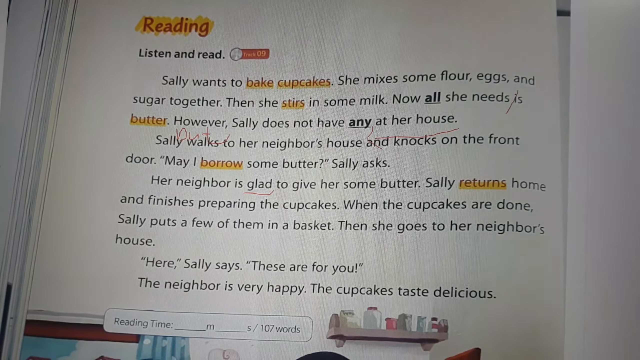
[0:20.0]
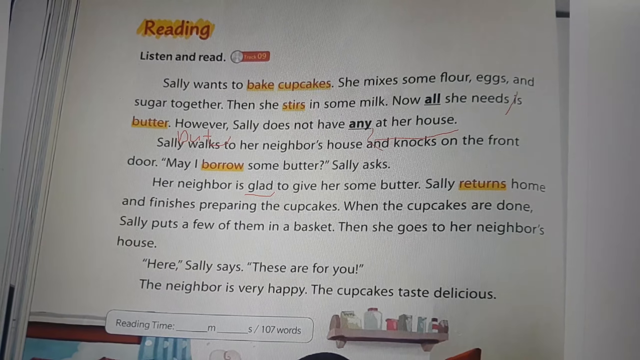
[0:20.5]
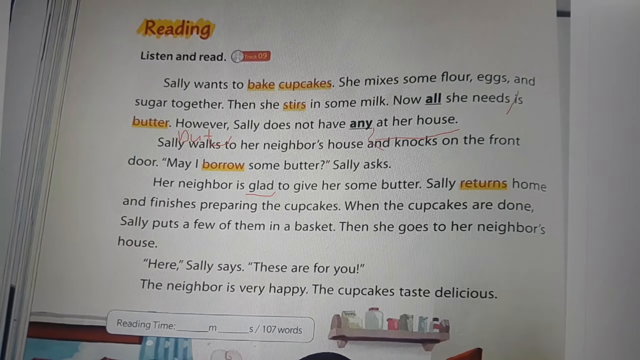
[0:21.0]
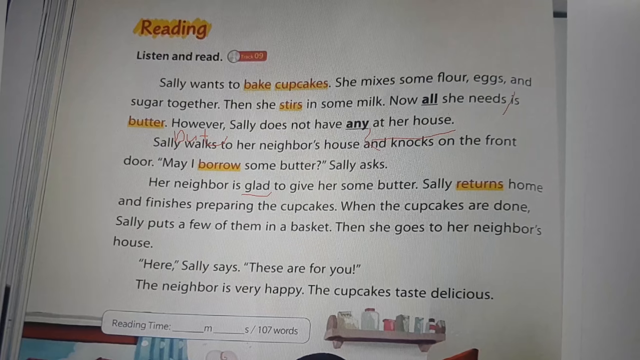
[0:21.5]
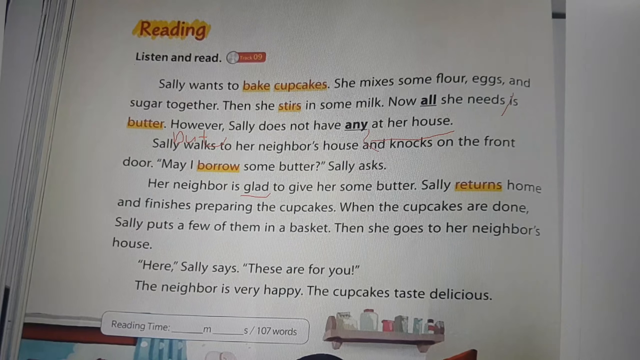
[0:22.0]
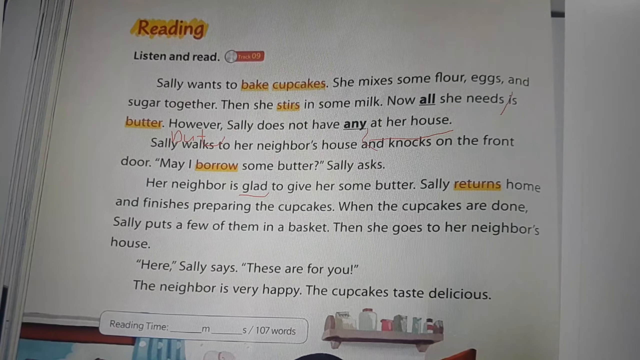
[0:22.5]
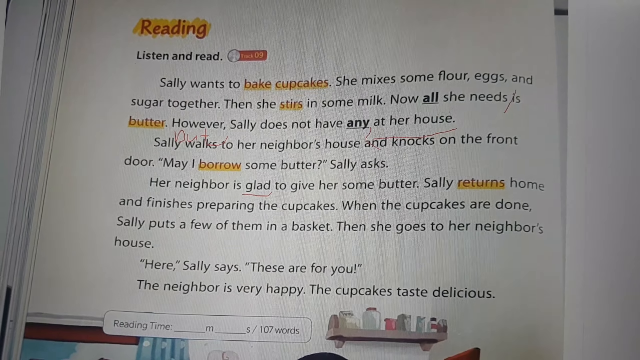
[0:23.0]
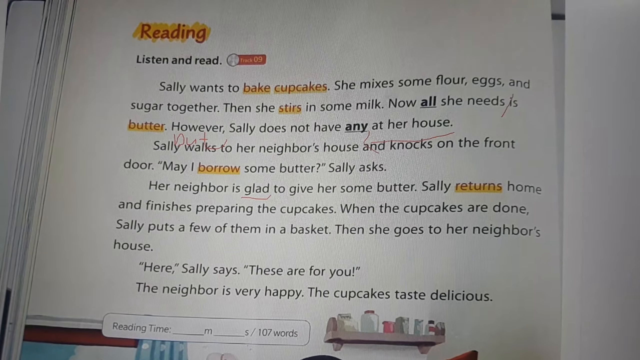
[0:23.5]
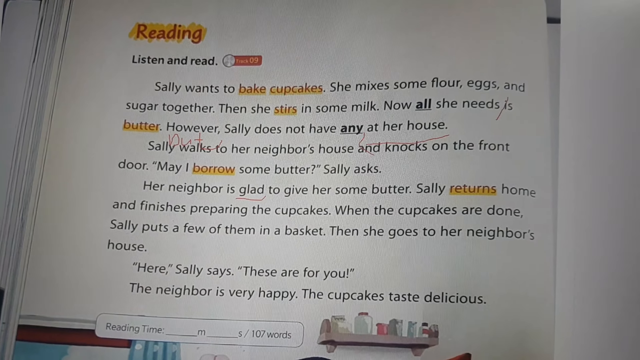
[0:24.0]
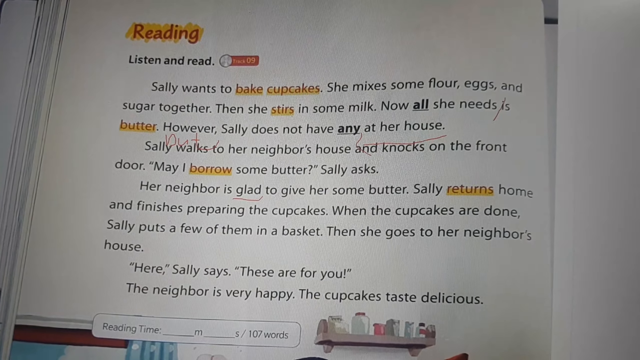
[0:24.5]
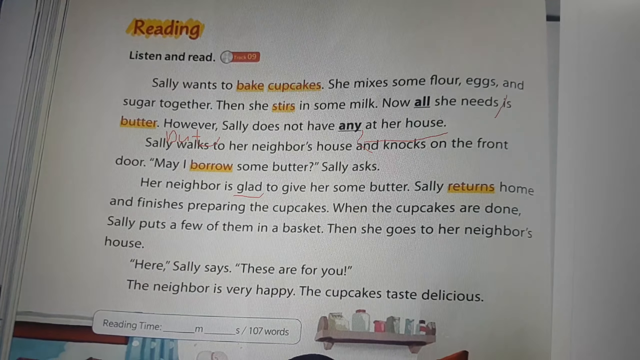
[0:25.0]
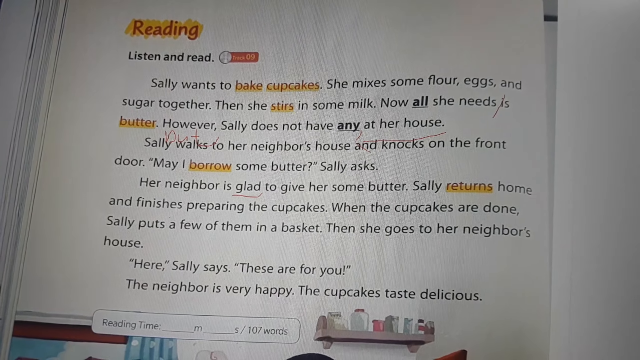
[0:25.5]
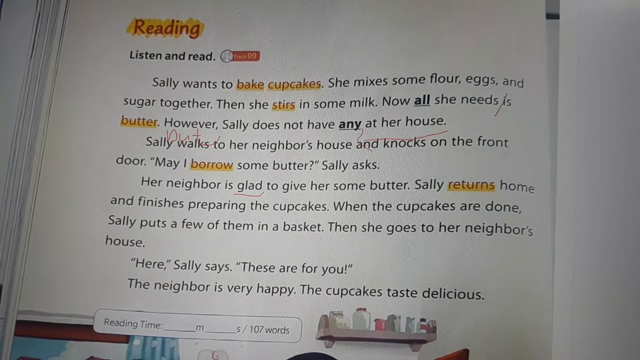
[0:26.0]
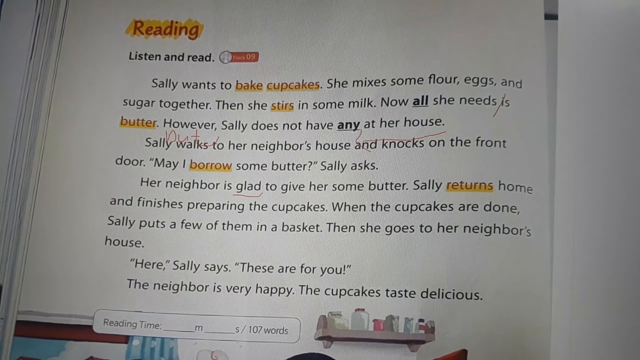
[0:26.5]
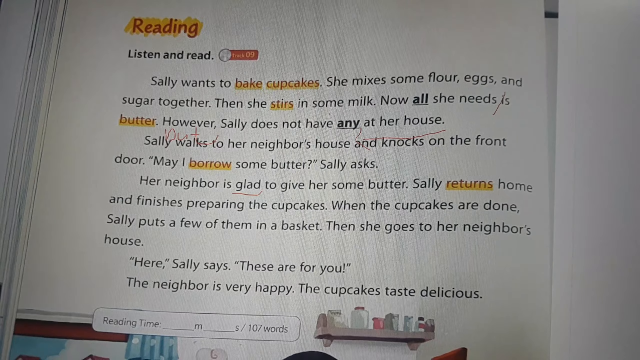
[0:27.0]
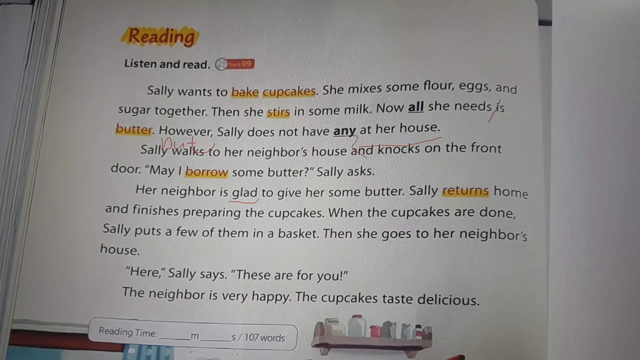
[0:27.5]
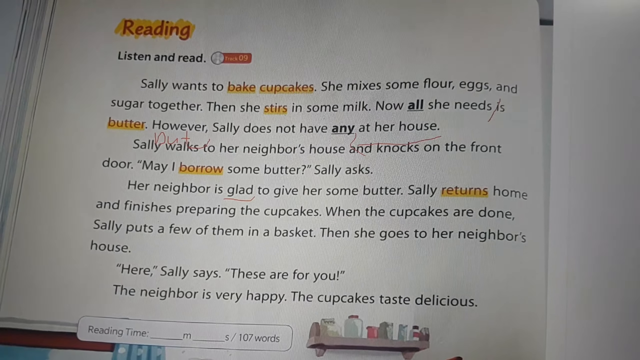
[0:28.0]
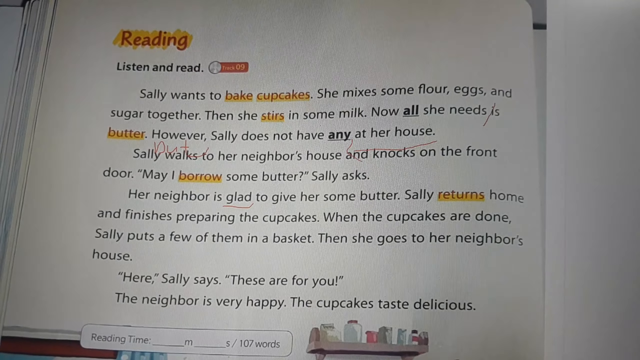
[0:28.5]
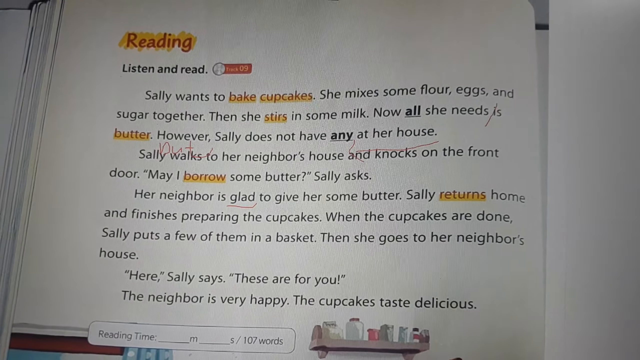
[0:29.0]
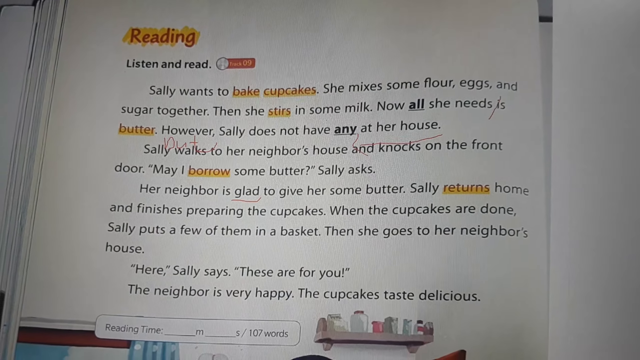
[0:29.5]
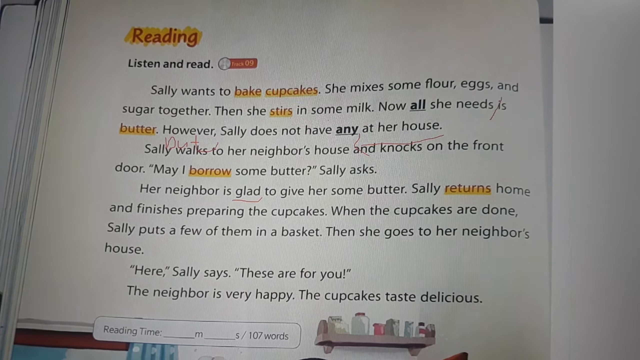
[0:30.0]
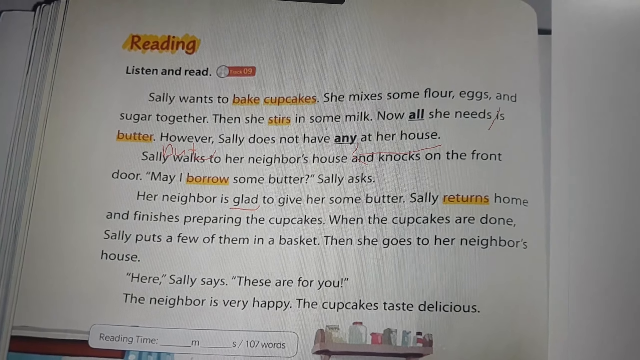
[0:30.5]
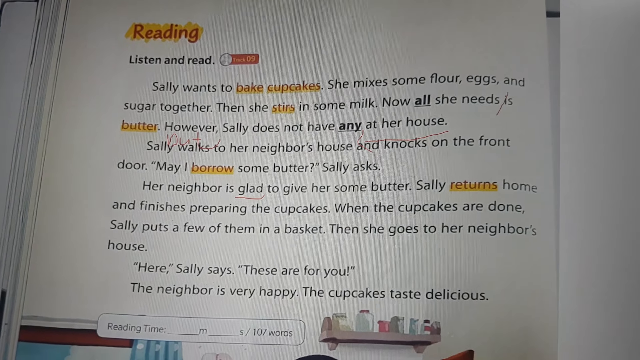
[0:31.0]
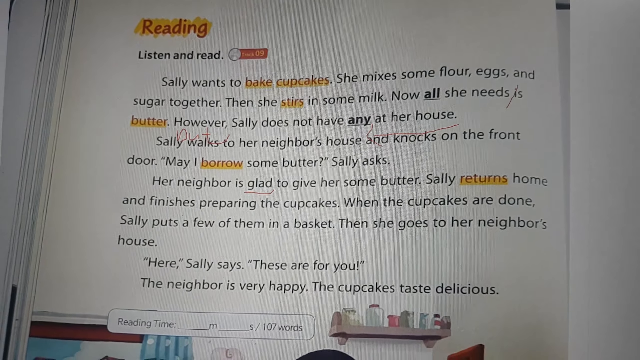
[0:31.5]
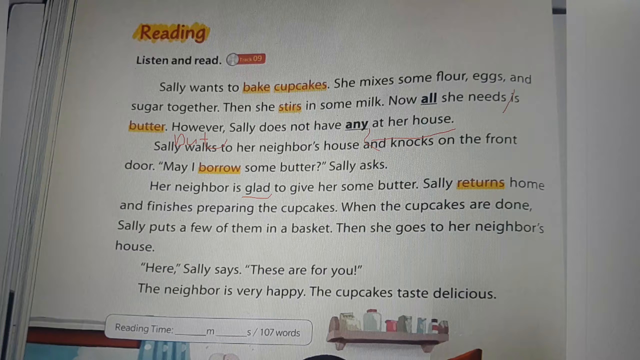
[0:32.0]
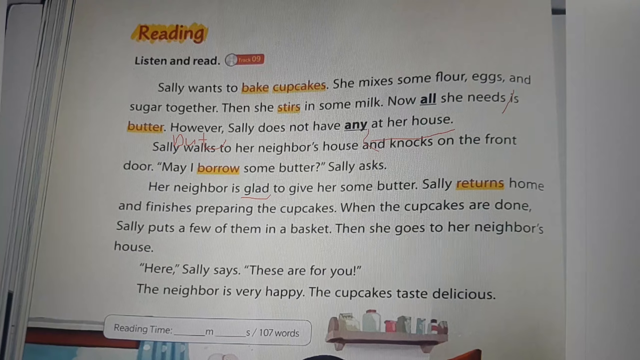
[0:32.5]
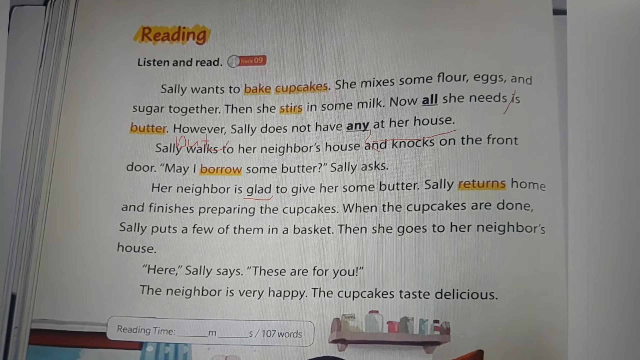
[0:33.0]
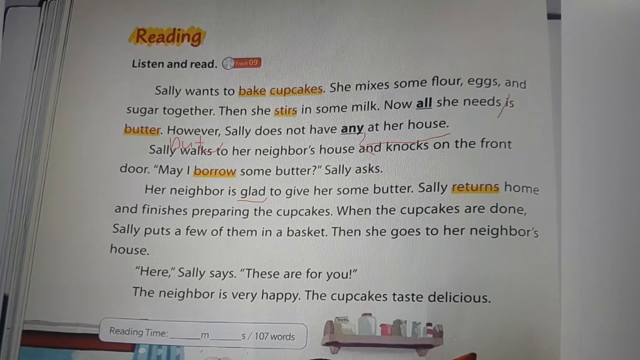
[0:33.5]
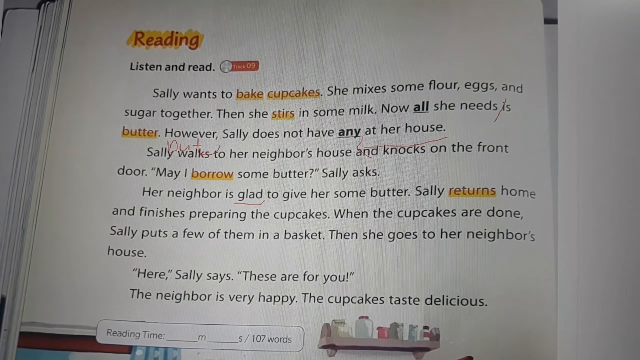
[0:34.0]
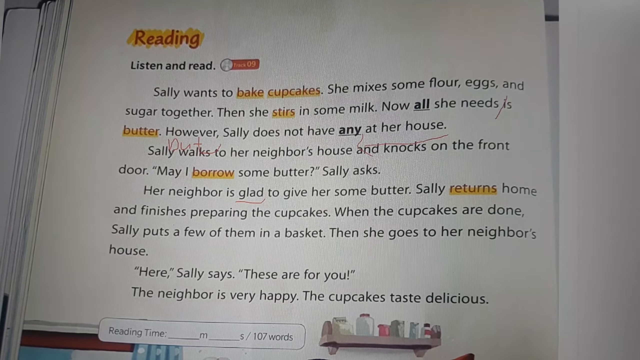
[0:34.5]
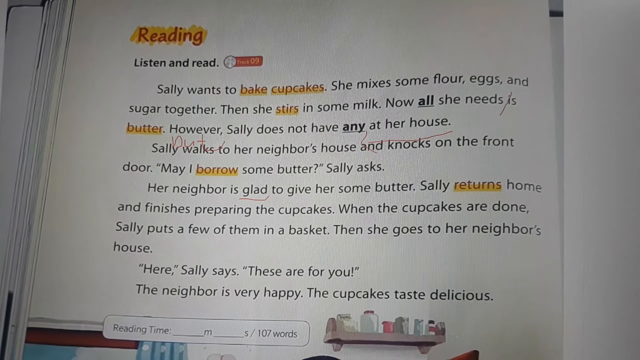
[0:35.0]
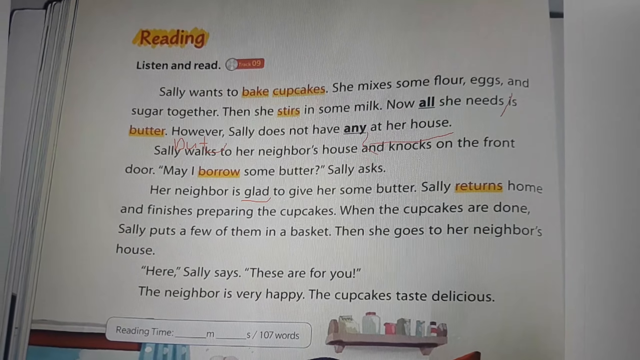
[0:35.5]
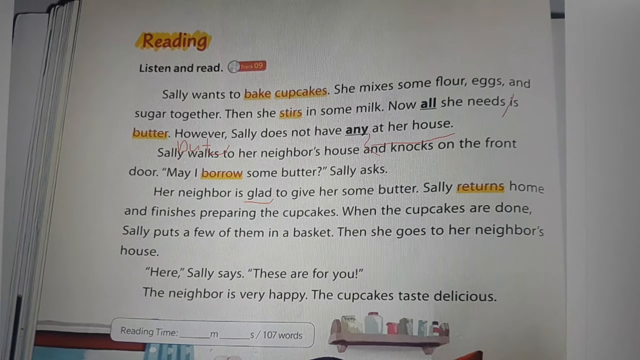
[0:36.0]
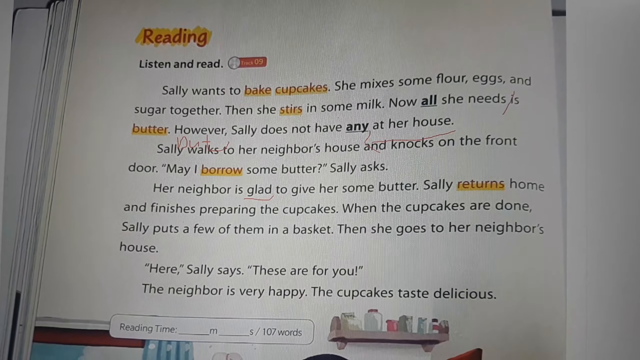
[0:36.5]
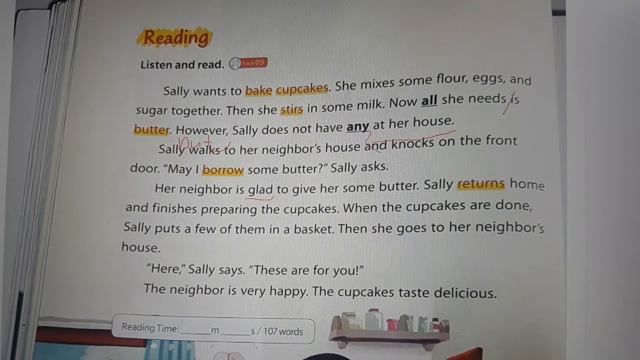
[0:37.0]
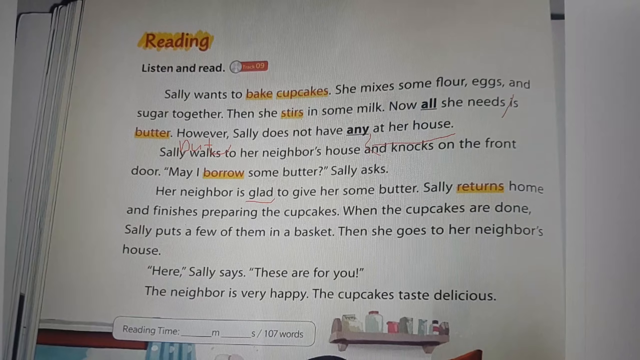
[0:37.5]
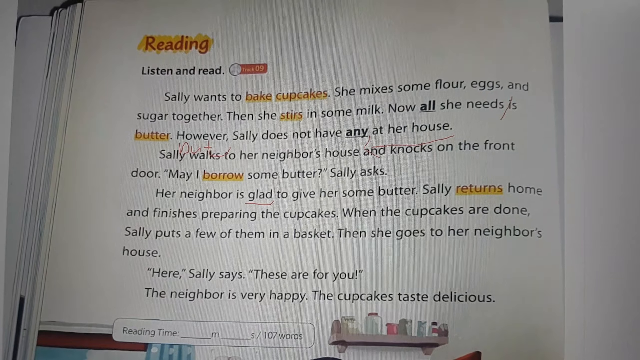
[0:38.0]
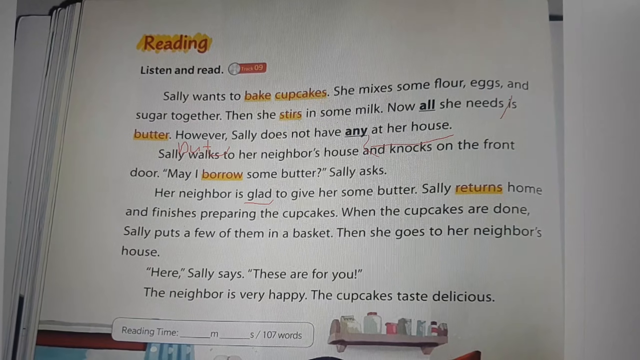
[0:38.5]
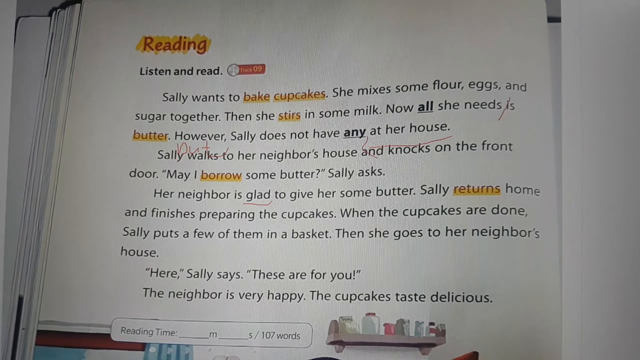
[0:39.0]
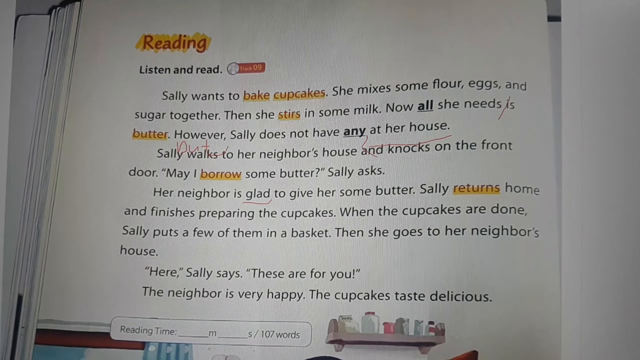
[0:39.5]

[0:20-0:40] The camera stays on the same reading page. The story appears to be about someone named Sally who wants to bake cupcakes. The page reads: "She mixes some flour, eggs, and sugar together, then she stirs in some milk. Now all she needs is butter. However, Sally does not have any at her house. Sally walks to her neighbor's house and knocks on the front door. May I borrow some butter? Sally asks." There is also writing on the page itself: between "Sally" and "walks," the word "out" is written in red.